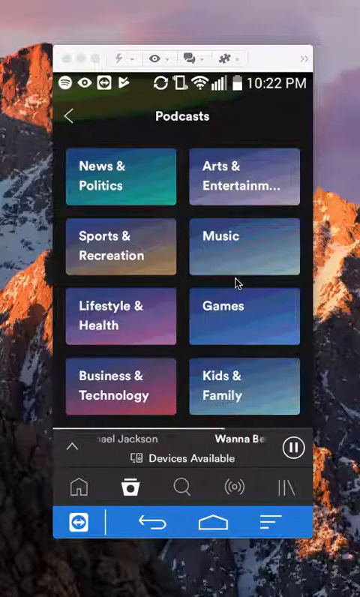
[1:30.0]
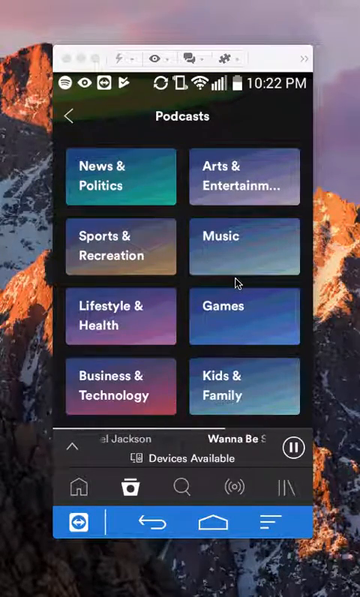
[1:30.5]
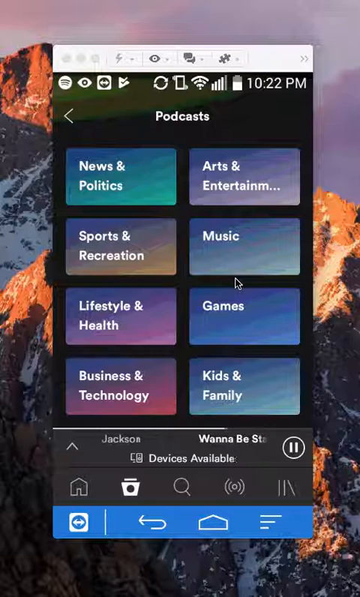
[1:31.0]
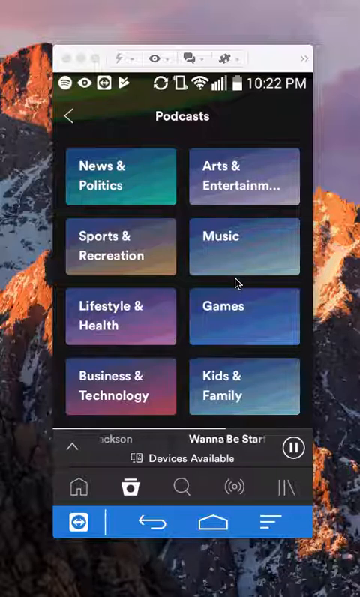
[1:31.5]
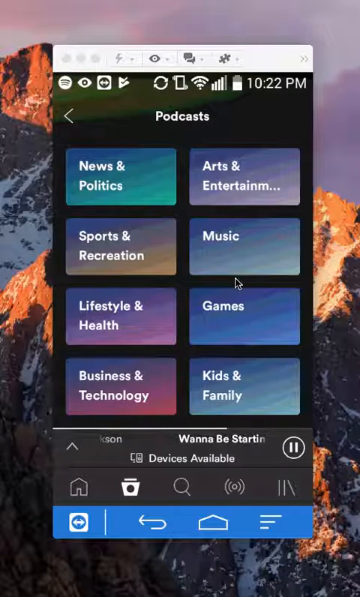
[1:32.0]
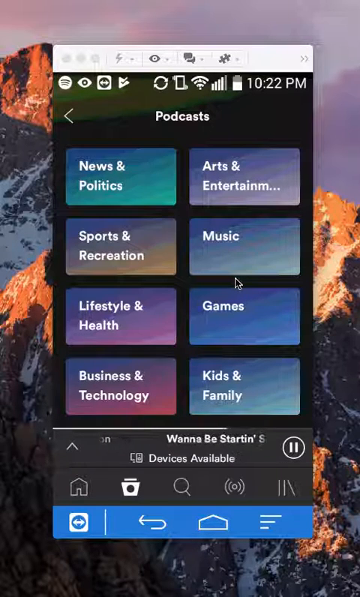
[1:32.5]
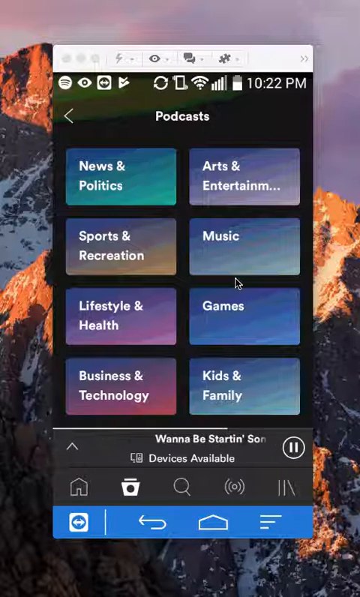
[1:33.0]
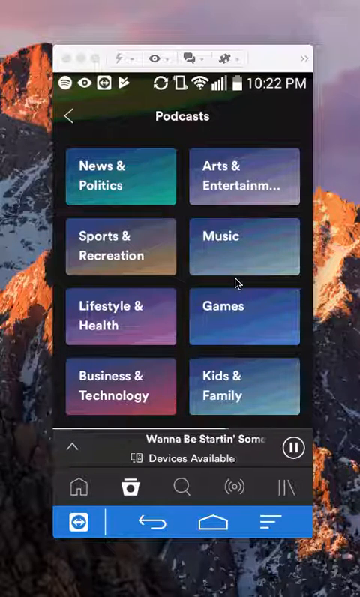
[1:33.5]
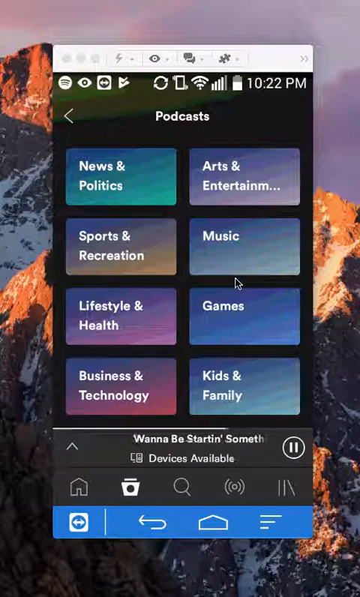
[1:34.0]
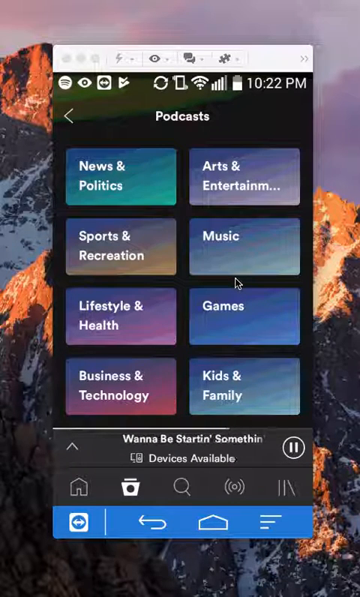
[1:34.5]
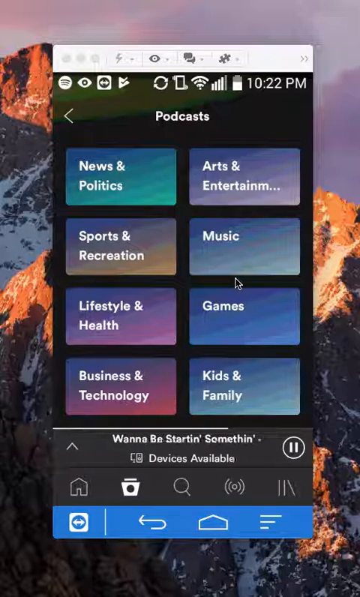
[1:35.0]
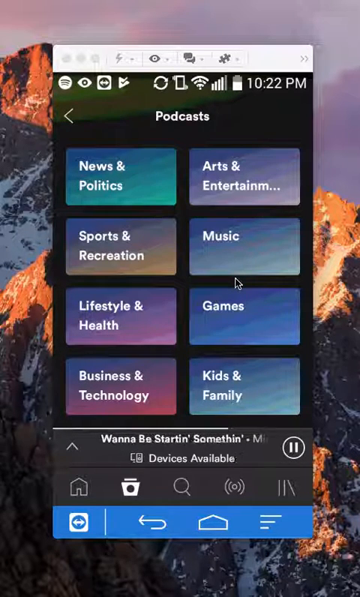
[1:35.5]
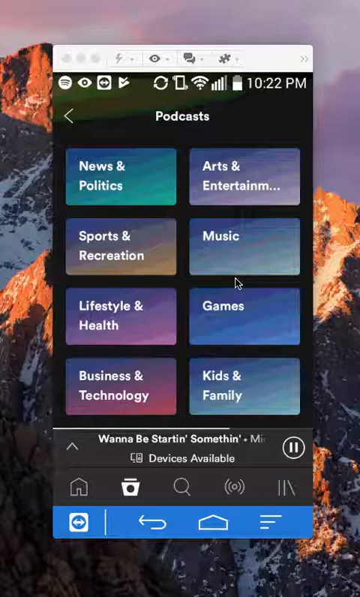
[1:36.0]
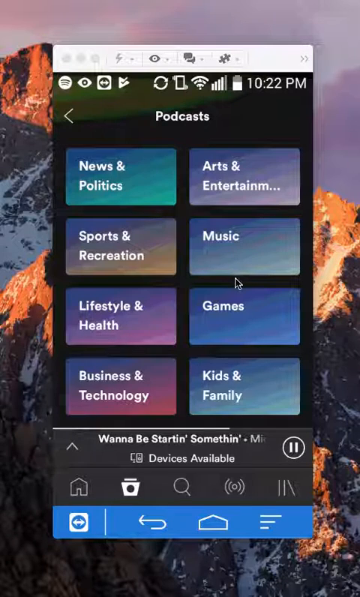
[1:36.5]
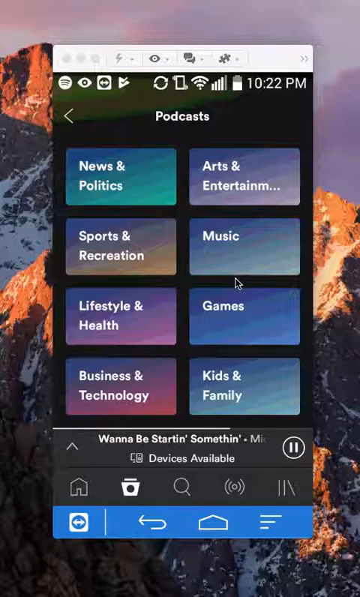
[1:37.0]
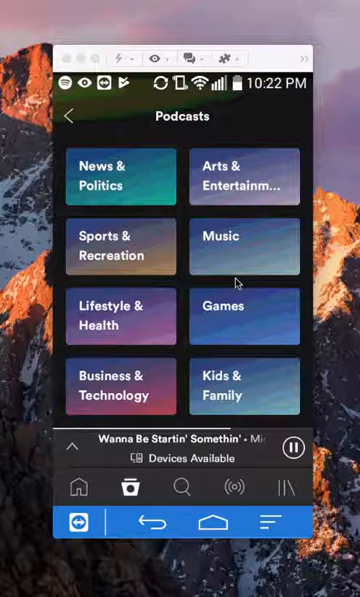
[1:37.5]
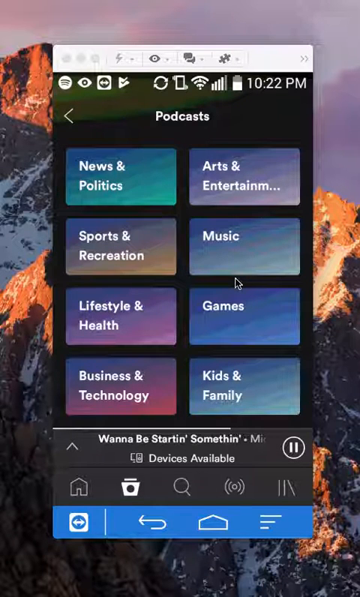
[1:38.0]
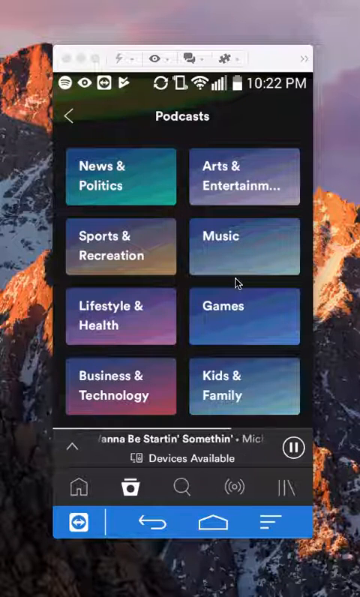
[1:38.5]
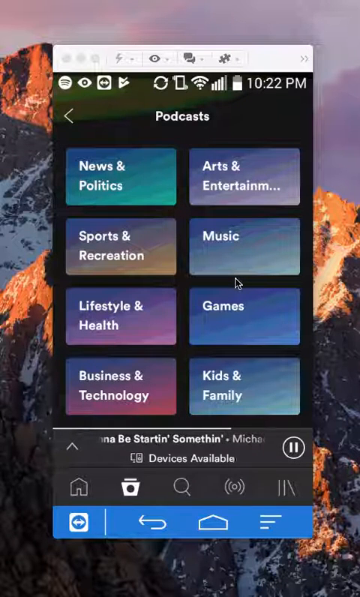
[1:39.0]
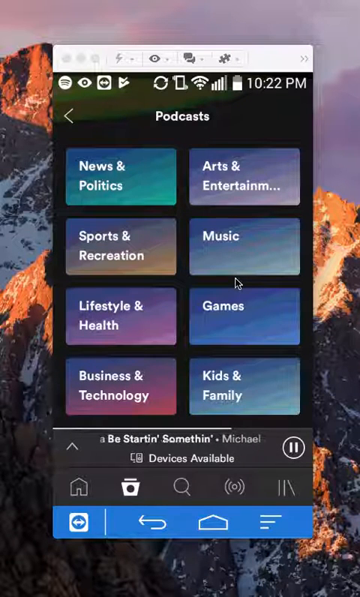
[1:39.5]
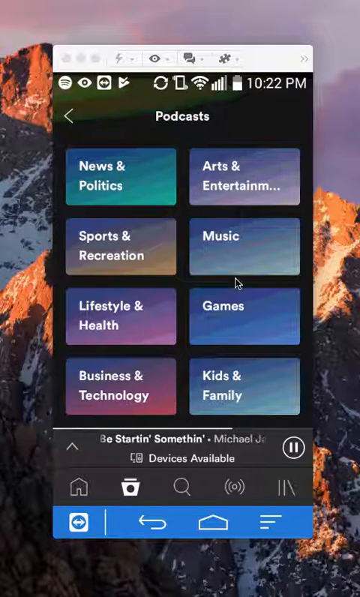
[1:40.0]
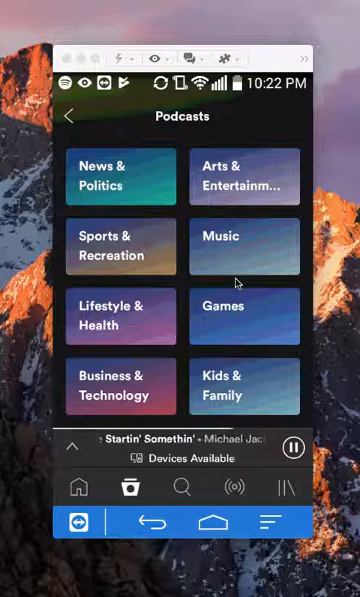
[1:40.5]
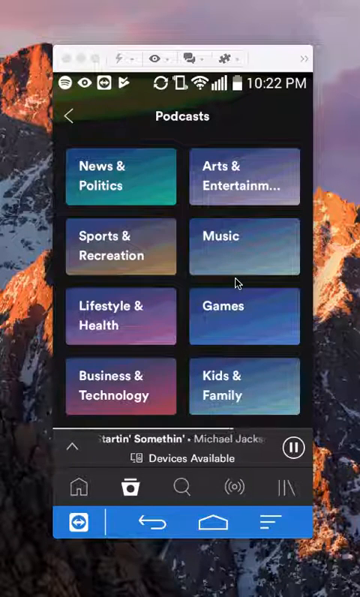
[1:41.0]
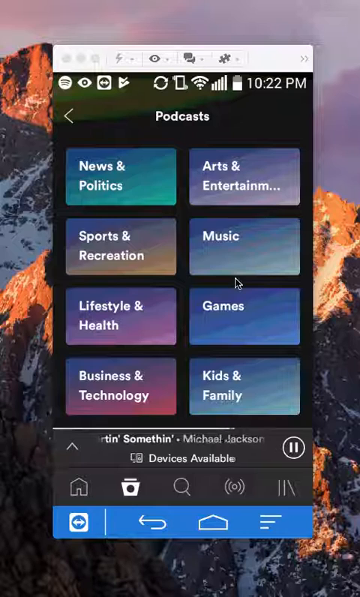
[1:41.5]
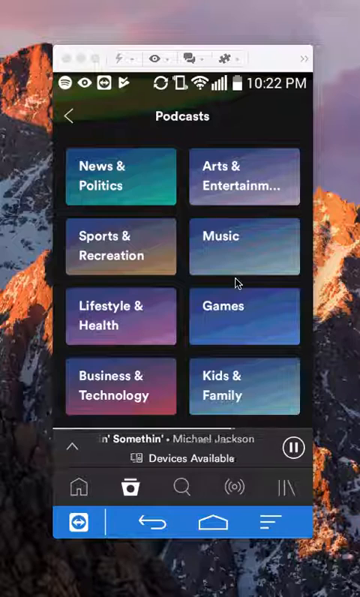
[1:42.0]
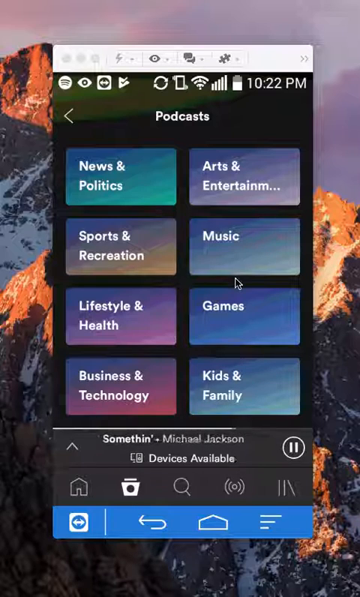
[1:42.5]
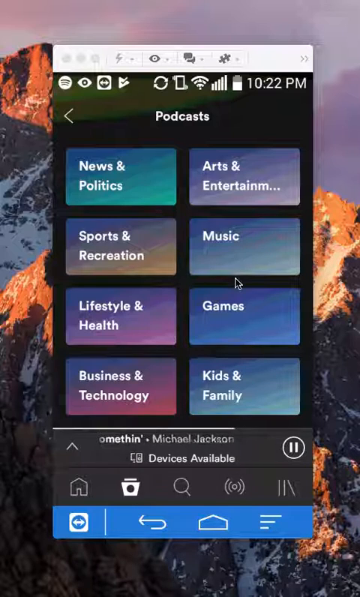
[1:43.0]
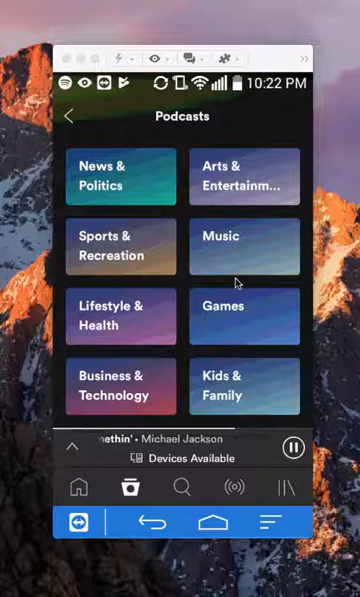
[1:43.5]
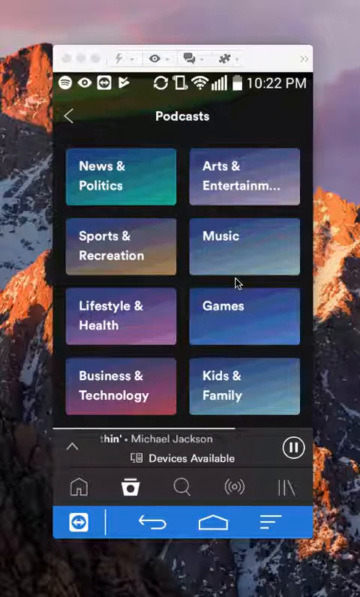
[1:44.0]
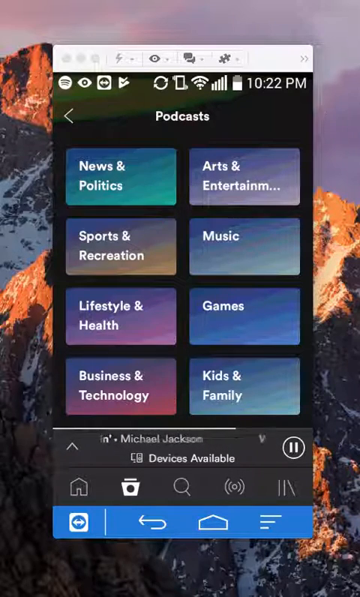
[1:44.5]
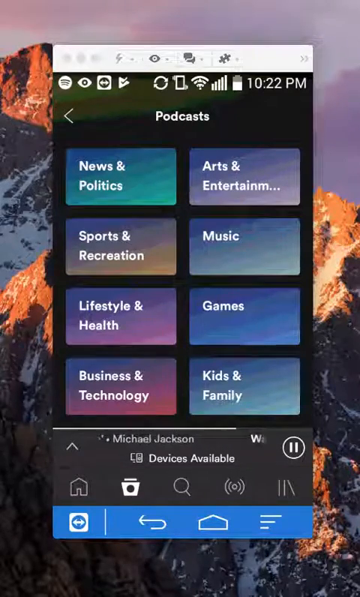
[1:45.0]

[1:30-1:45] A music application is overlaid on a background image of a cliff face with jagged sides, snow, and sunlight on the rocks. The podcast section of the application is in focus. The podcast categories shown are Top Podcast, Comedy, Educational, Stories, News and Politics, Arts and Entertainment, Sports and Recreation, and Music. Top Podcast is light and dark blue, Comedy purple and blue, Educational blue and light blue, Stories brown and dark blue, News and Politics light blue and teal, Arts and Entertainment light and dark purple, Sports and Recreation orange and blue, and Music dark blue and light blue, each background having a thin-striped abstract pattern. The selected track is by Michael Jackson with the title "Wannabe Startin' Somethin'", which moves from right to left on the information panel. Underneath the song's title are the application buttons: a home icon at the left, the podcast browse category second from the left, the search icon in the middle, a live music icon after it, and a catalog icon on the far right. At the very bottom of the app, in a blue section, are a back icon and a home icon next to the settings icon on the right.